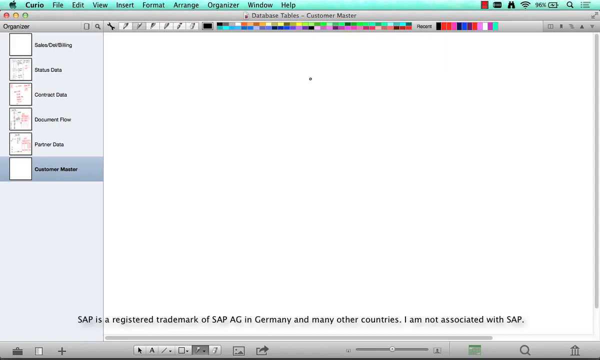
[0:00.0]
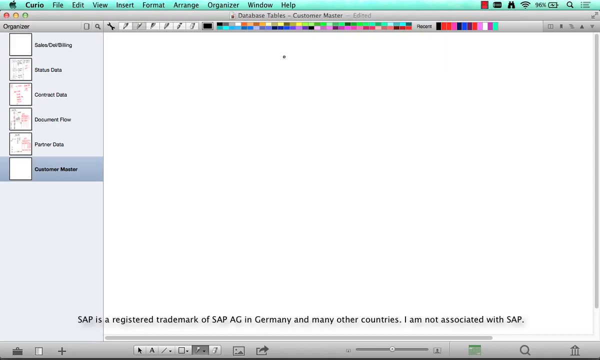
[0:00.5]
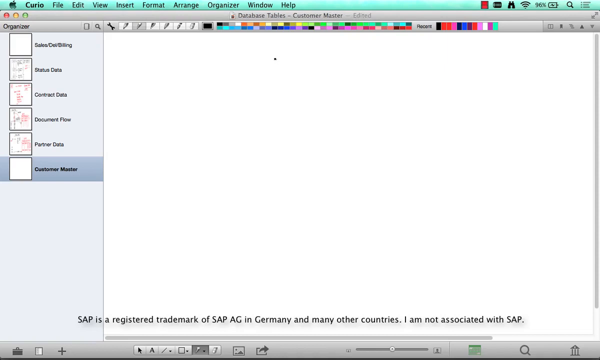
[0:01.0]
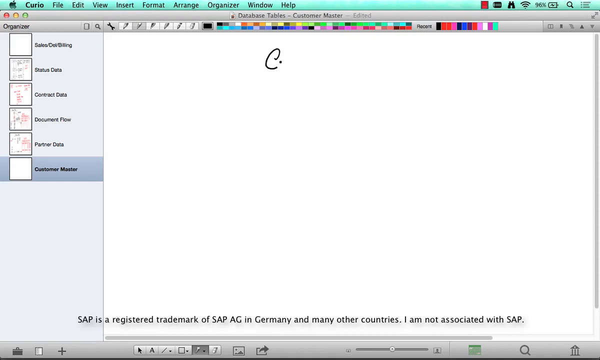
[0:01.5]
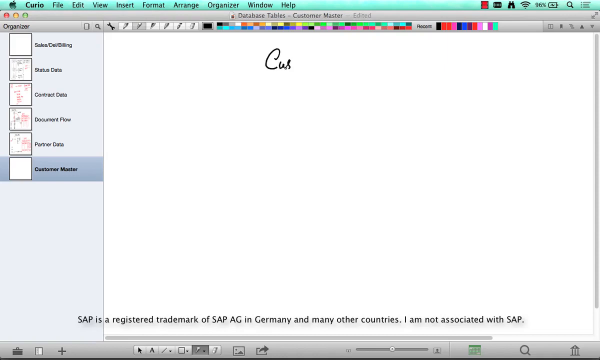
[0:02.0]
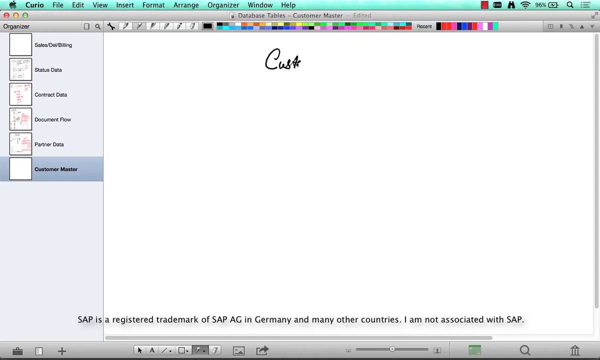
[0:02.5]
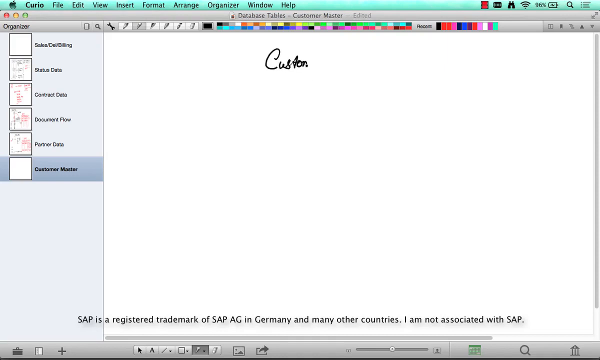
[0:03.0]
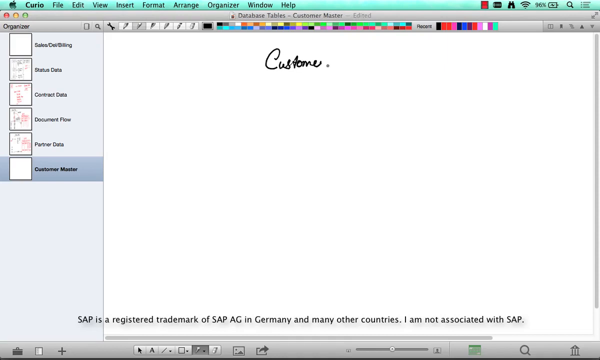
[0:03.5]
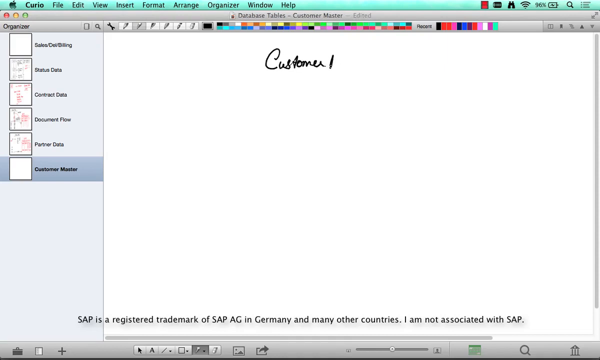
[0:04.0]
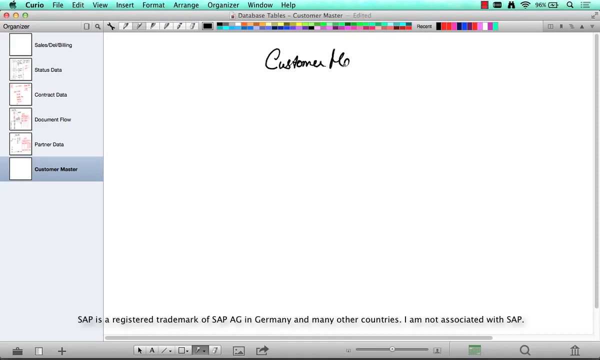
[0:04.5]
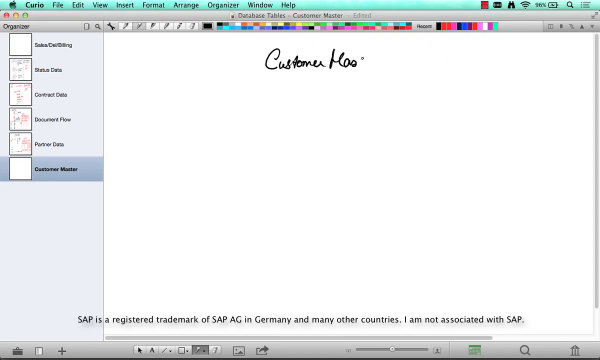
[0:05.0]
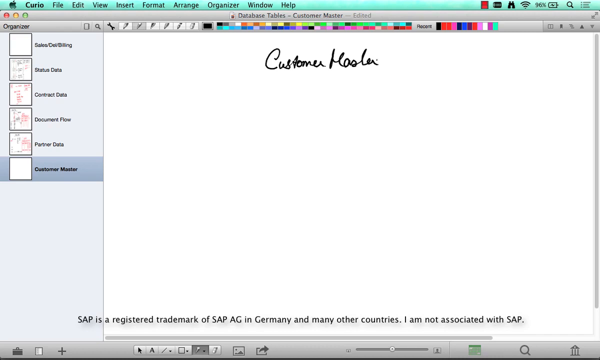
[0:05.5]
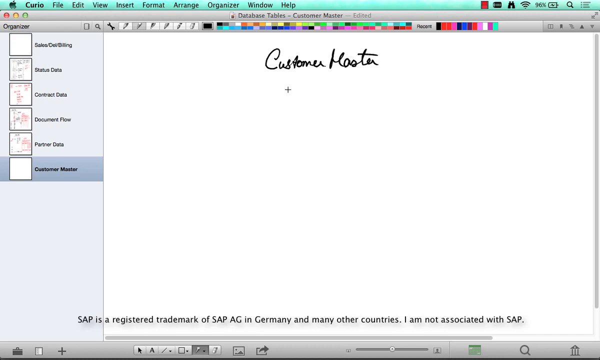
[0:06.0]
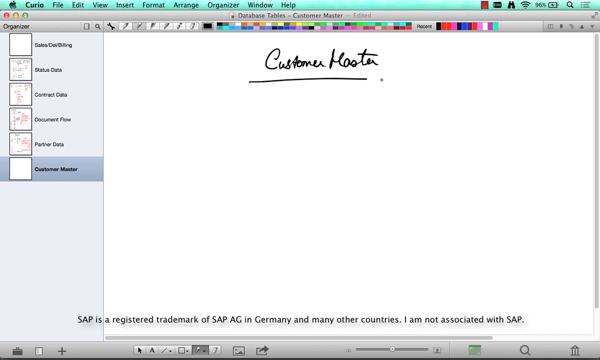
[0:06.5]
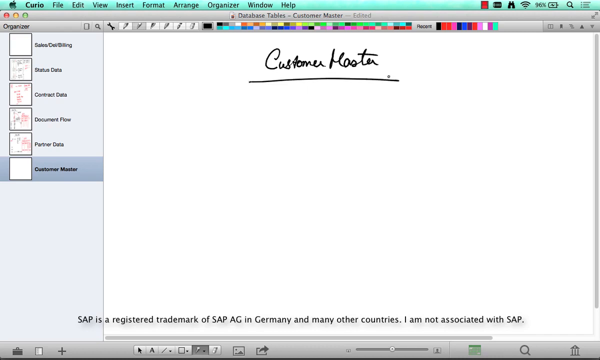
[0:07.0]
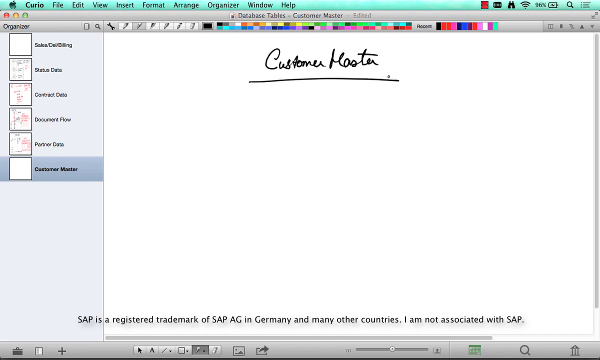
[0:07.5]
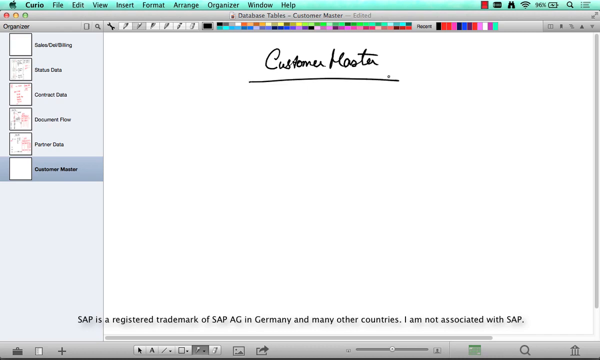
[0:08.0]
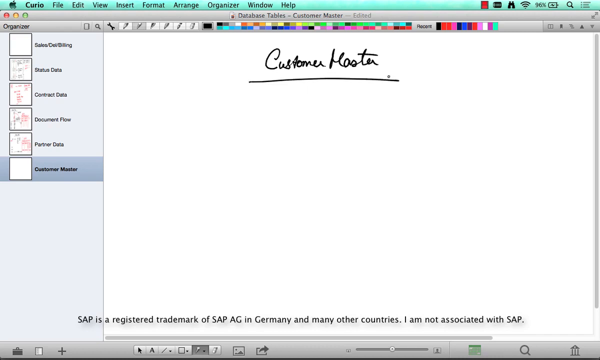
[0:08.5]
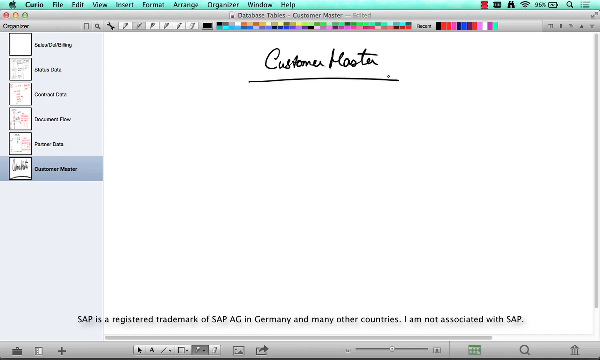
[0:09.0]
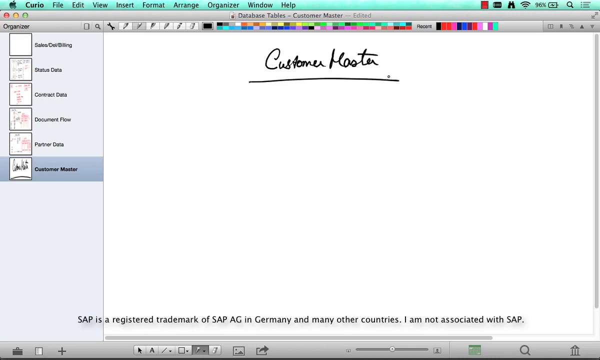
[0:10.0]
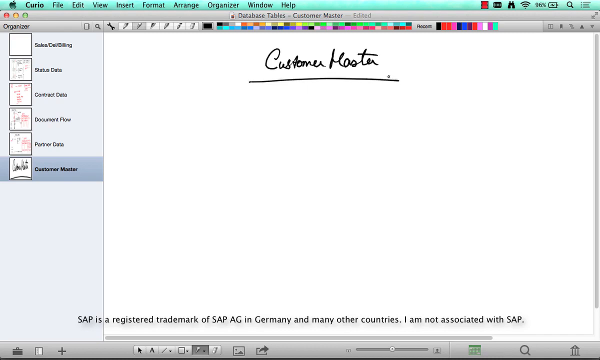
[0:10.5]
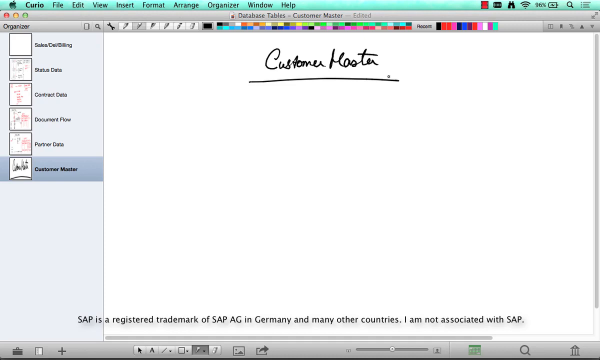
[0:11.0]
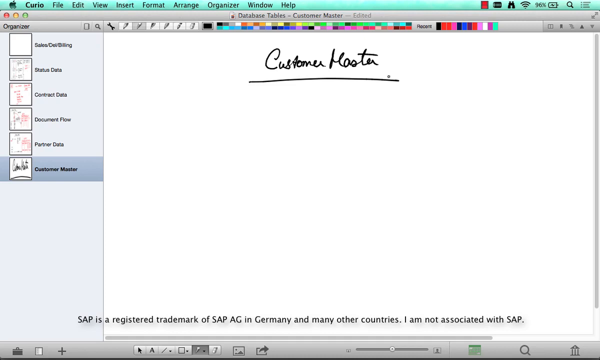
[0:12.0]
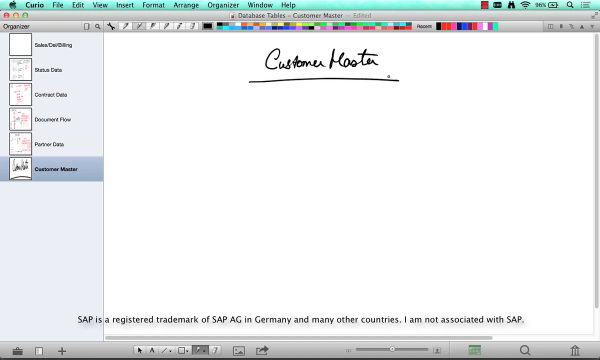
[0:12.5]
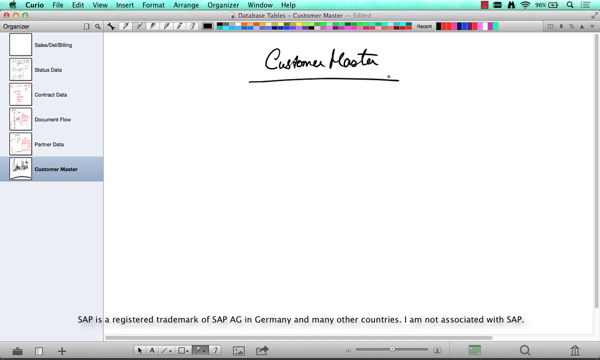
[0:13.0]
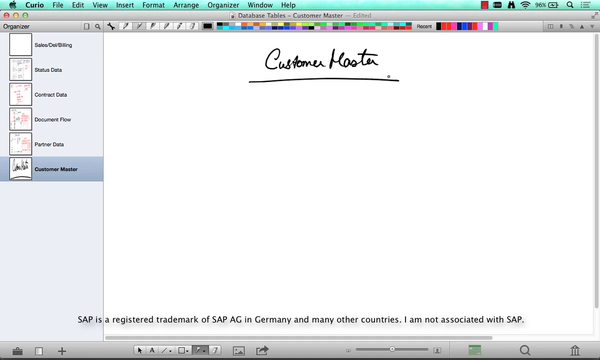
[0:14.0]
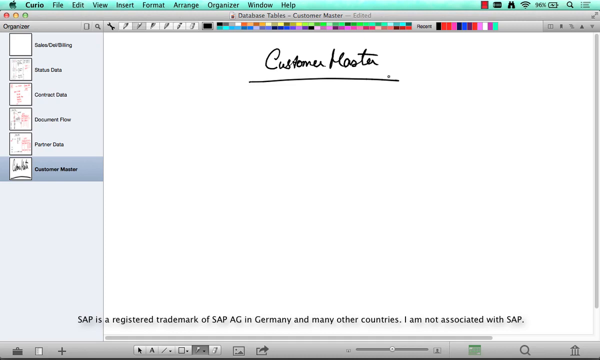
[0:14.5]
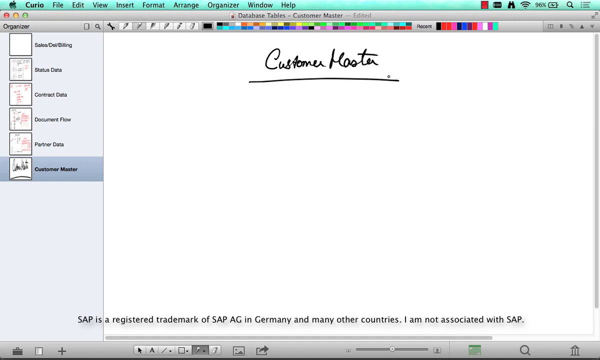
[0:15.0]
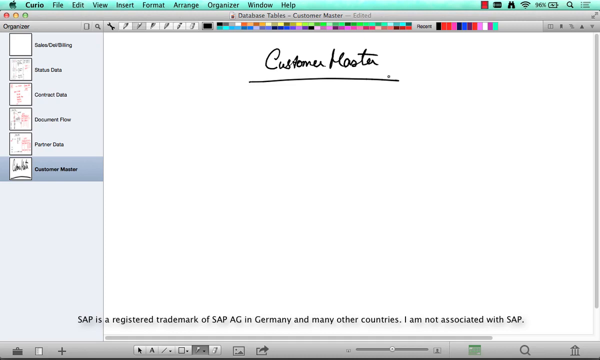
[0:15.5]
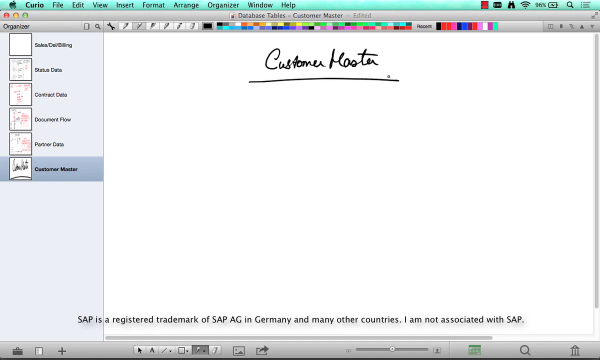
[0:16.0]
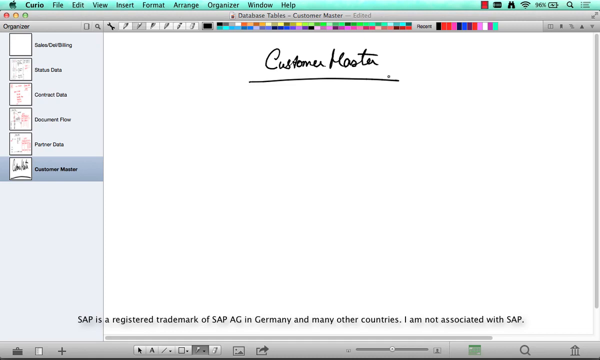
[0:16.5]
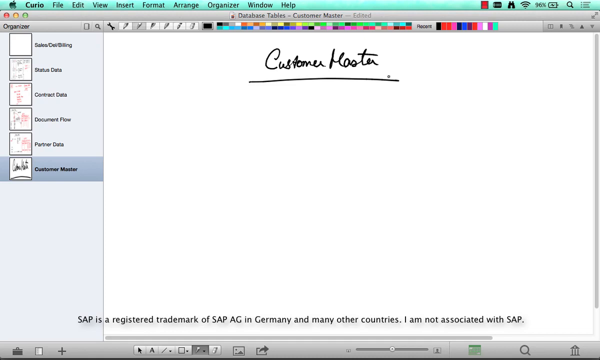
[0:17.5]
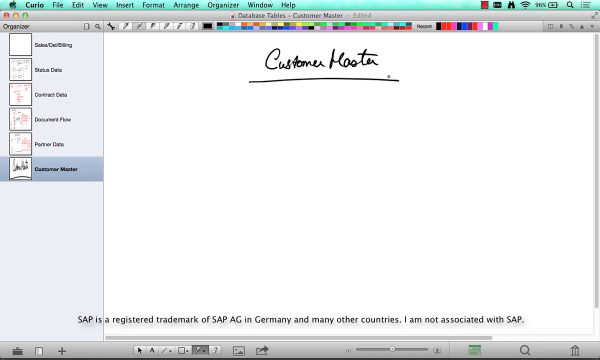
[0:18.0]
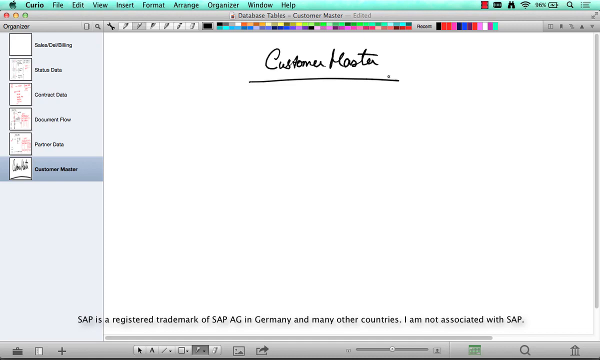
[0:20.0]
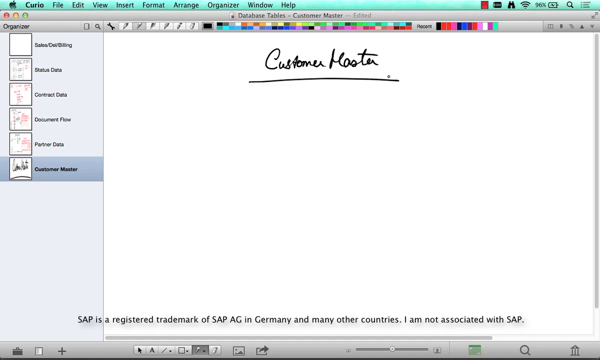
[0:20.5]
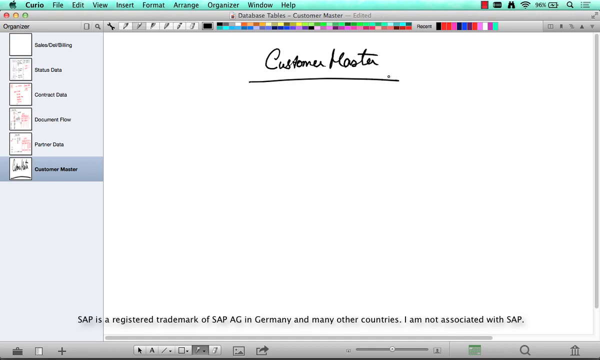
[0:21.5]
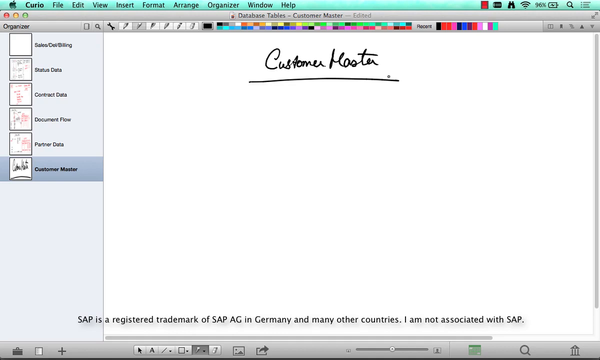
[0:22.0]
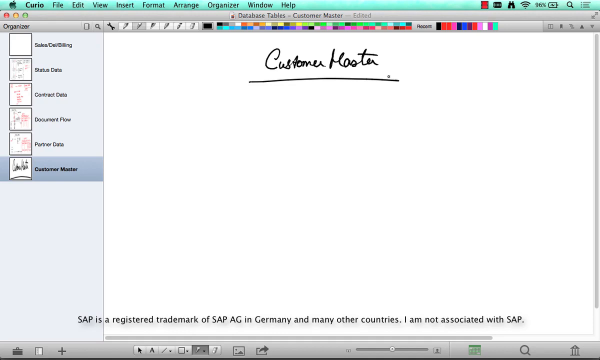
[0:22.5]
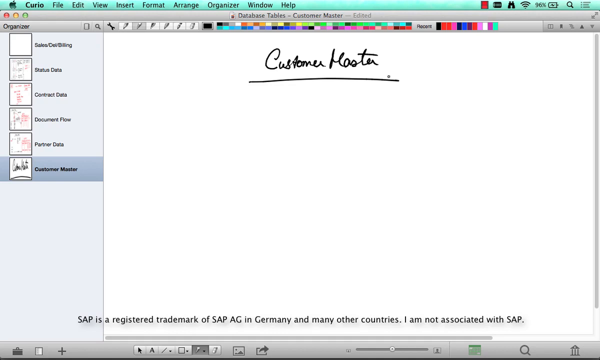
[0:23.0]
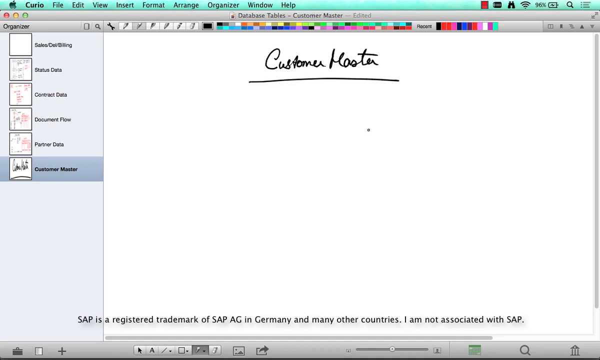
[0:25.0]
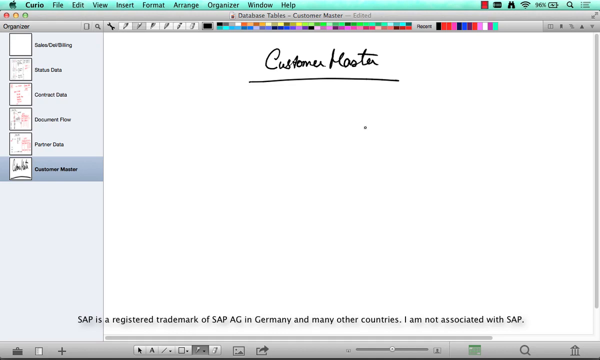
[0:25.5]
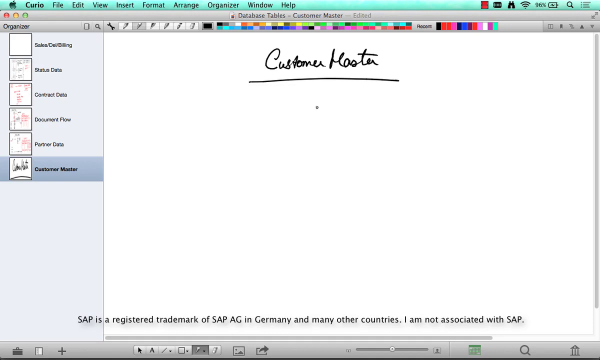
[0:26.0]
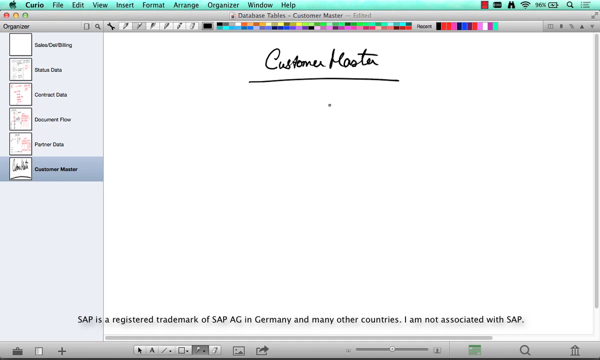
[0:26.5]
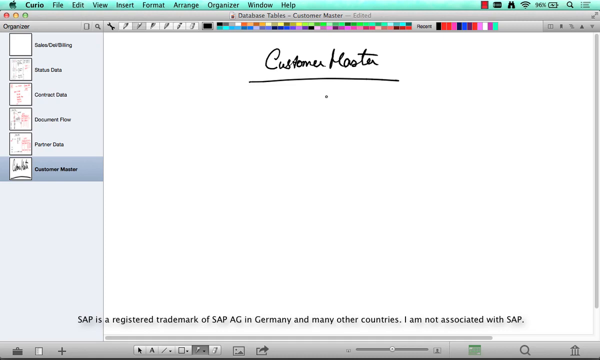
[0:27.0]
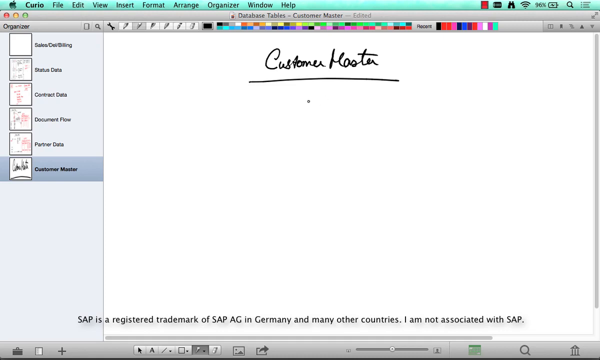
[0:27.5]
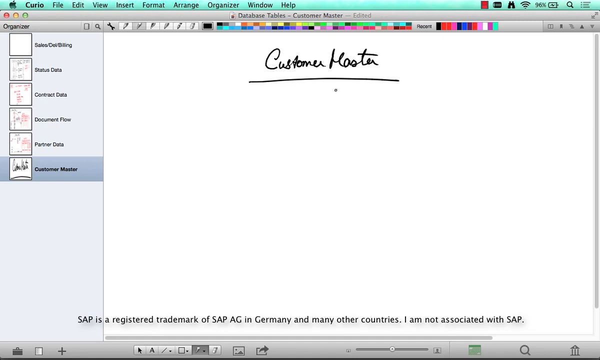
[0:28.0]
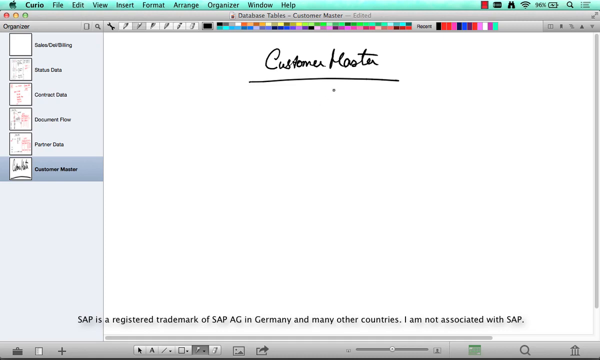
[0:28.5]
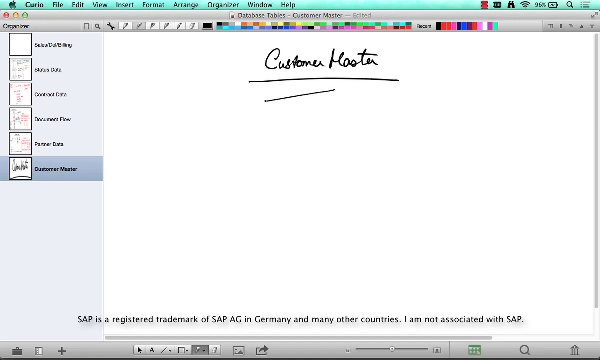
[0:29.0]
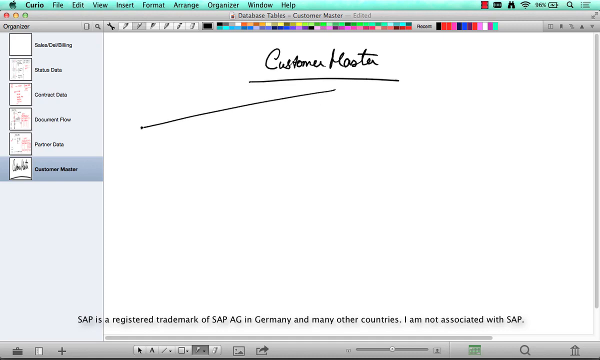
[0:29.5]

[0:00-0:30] A screen recording of someone's computer, apparently a Mac since an Apple symbol appears in the top left corner. The person is in an app called curio, which looks kind of like a paint app: along the top there is a bar of different colors and different pen modes, and on the left are the different pages they have open. The current page is customer master. Using a pen, they have written "customer master" in black handwriting, underlined below. At the bottom of the screen, text reads "SAP is a registered trademark of SAP AG in Germany and many other countries, I'm not associated with SAP". The screen stays like this for a while, then the mouse starts moving and a large arrow is drawn from the center of the customer master text toward the left side, but the view cuts off before it is complete. The application seems quite simple.